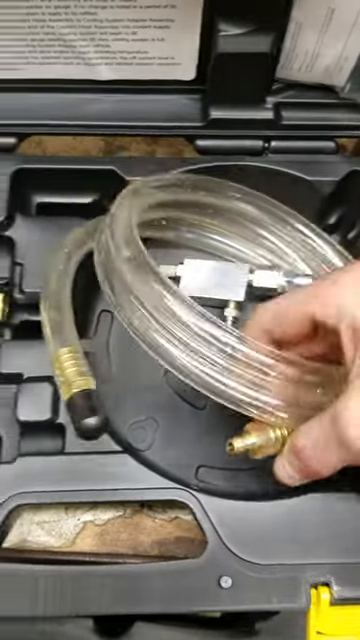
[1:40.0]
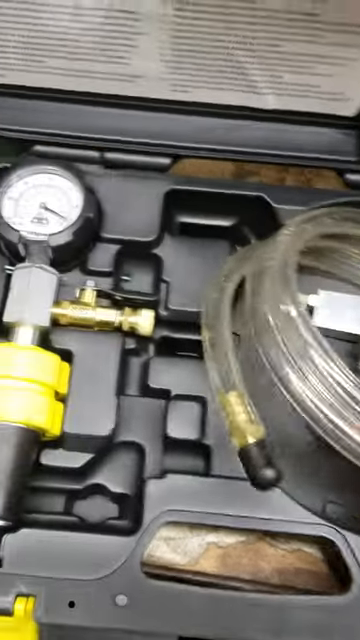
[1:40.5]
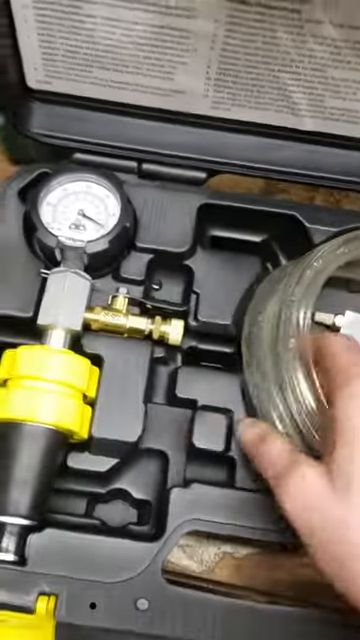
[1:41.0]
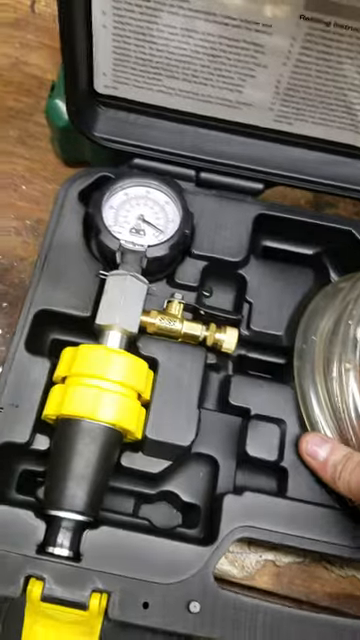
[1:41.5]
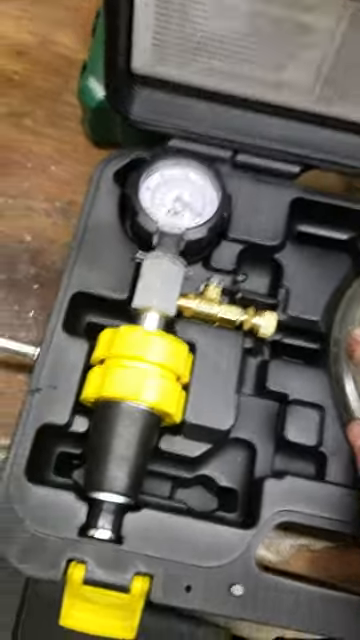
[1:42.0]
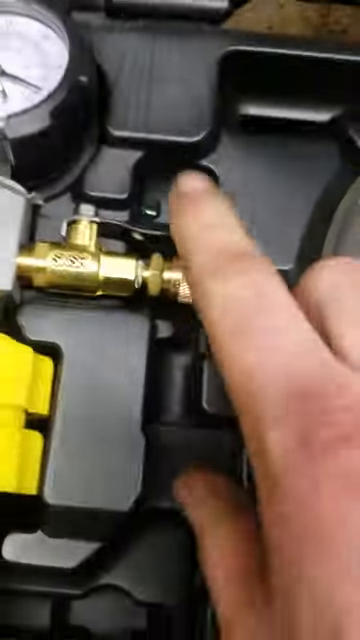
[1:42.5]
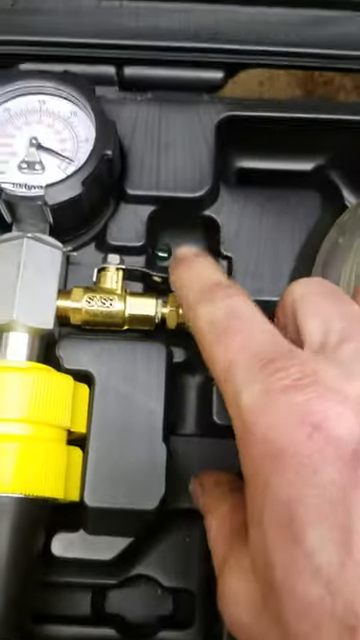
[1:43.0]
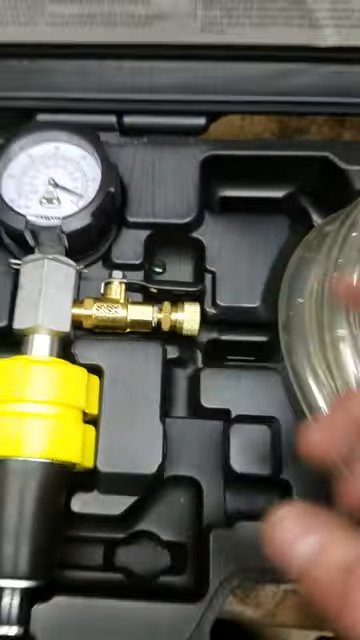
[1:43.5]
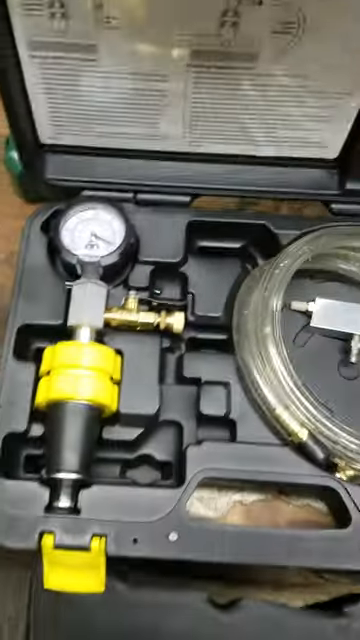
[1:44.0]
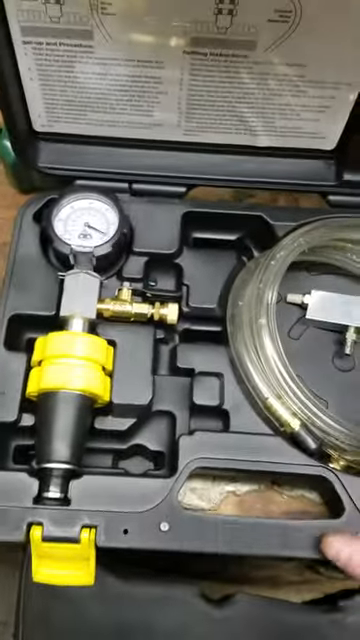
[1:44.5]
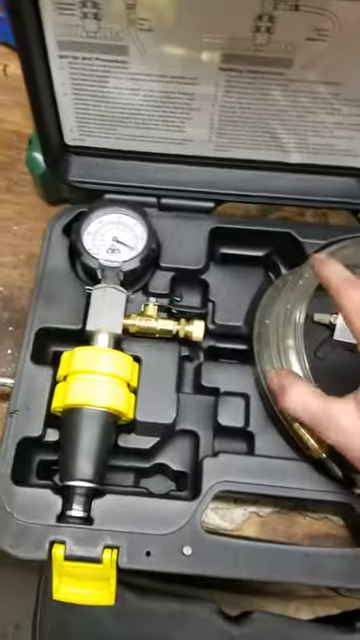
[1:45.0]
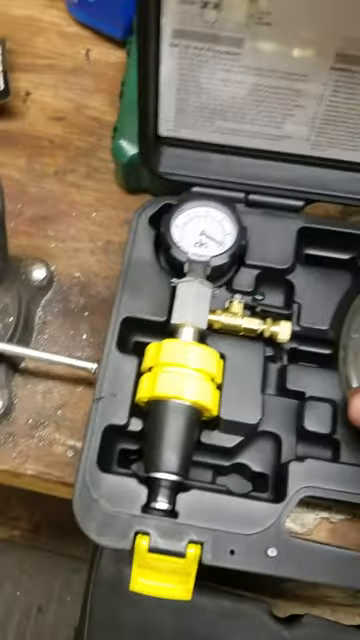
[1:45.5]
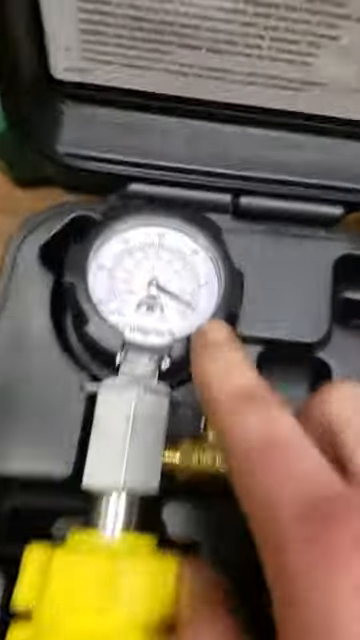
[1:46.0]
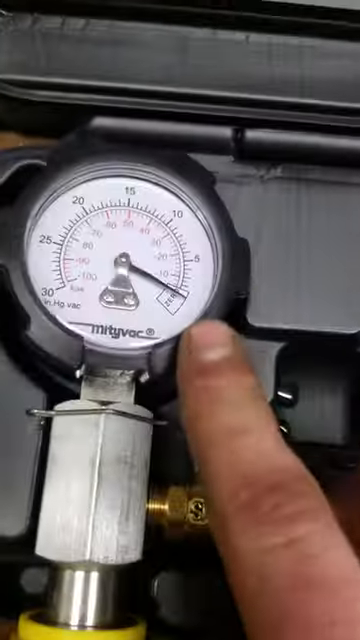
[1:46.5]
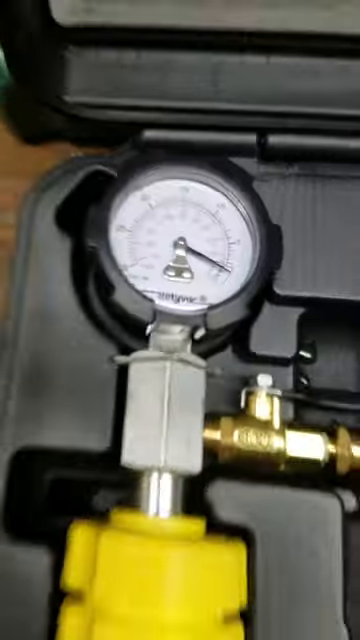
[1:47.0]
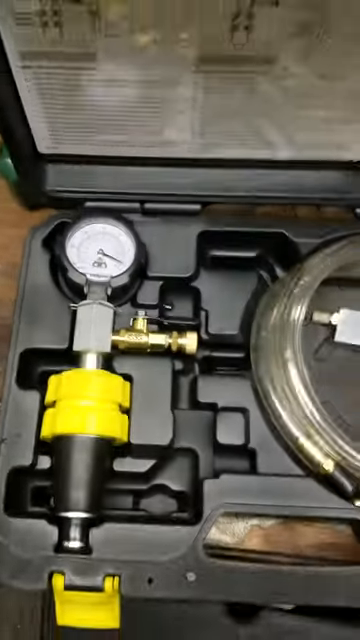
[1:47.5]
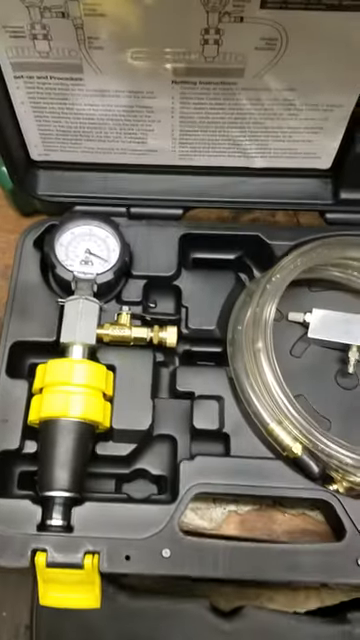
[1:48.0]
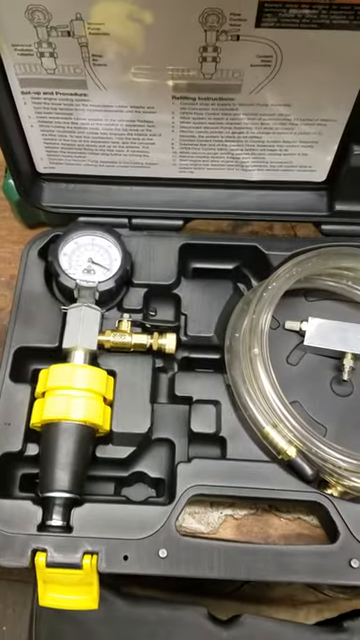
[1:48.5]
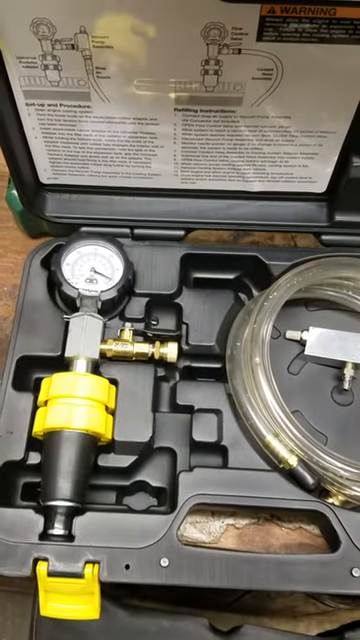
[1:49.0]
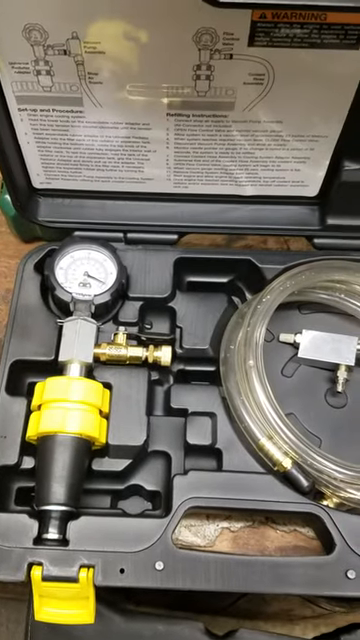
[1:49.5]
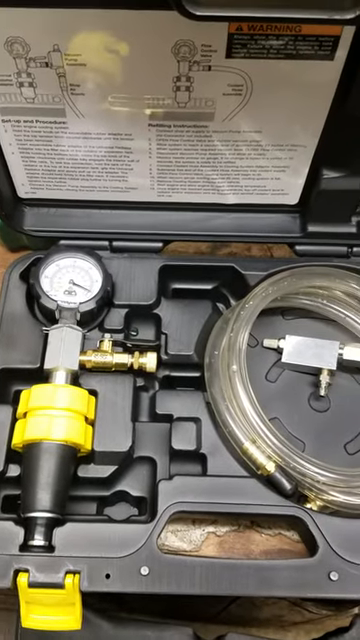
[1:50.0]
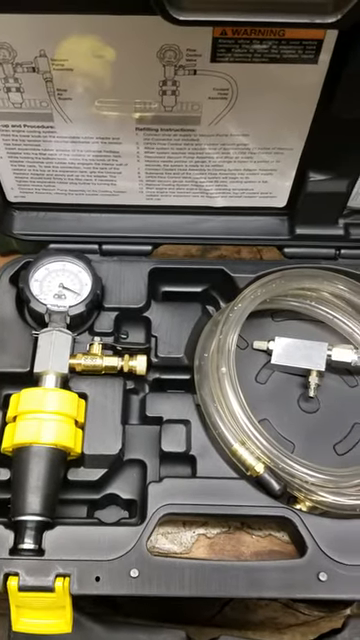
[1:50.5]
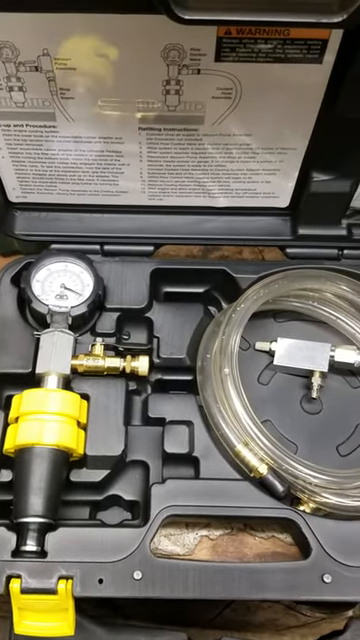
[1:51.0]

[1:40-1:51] A black plastic container has yellow clips that hold the case shut and clear tubing inside. It has gold coupling areas, with some silver as well, for hooking it to another type of device. It also appears to have a pressure valve controller that looks kind of like a clock showing the pressure, and there is a diagram in the upper part of the black case showing how it works.